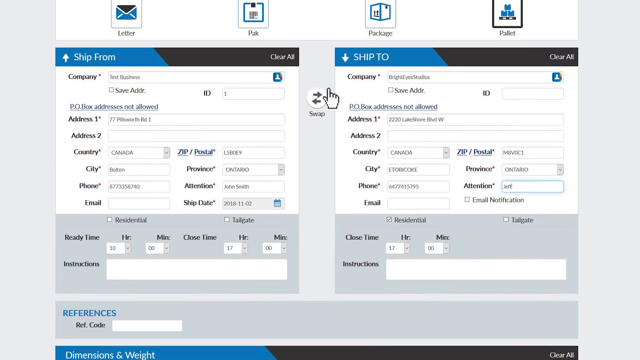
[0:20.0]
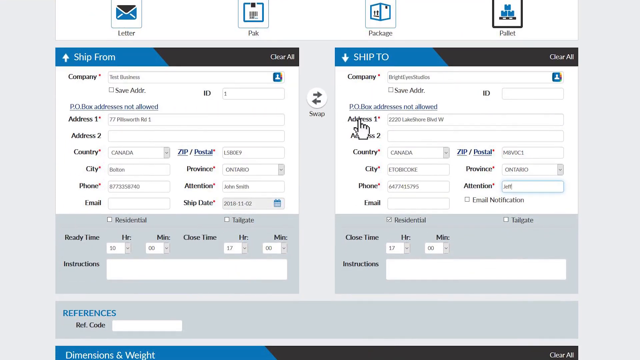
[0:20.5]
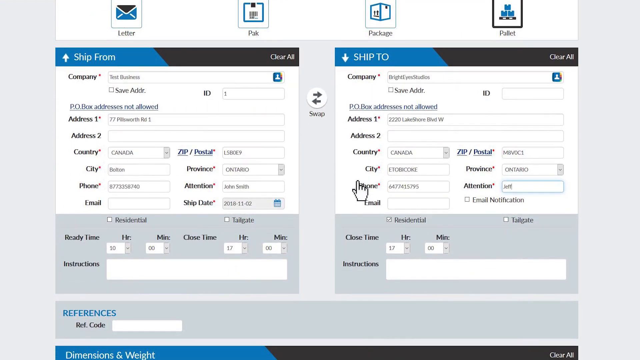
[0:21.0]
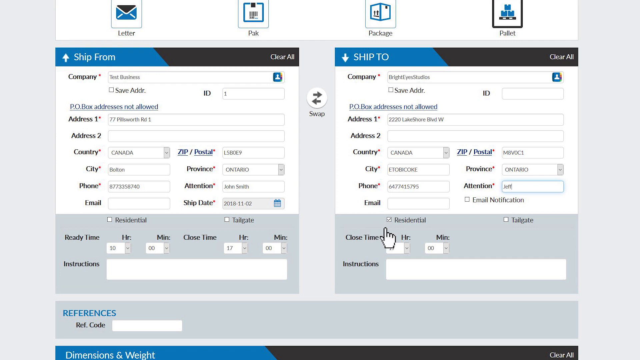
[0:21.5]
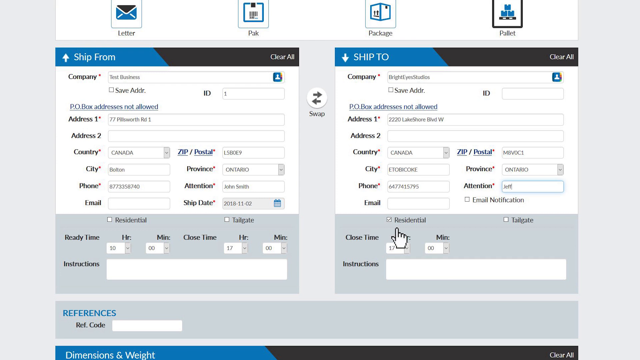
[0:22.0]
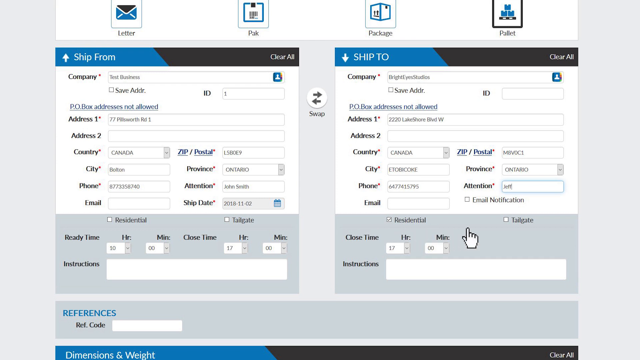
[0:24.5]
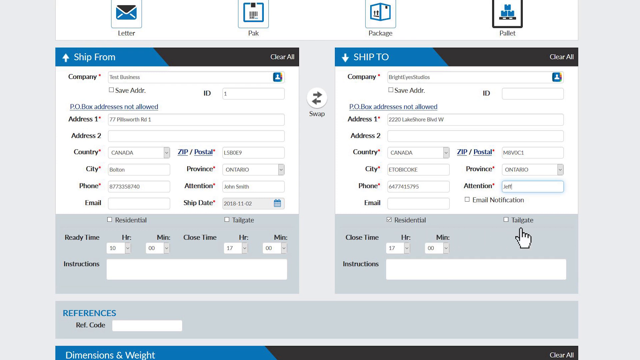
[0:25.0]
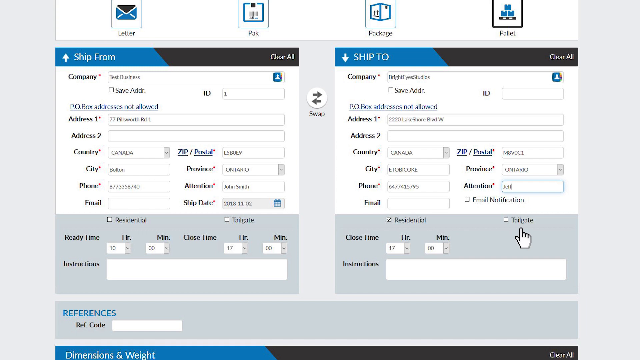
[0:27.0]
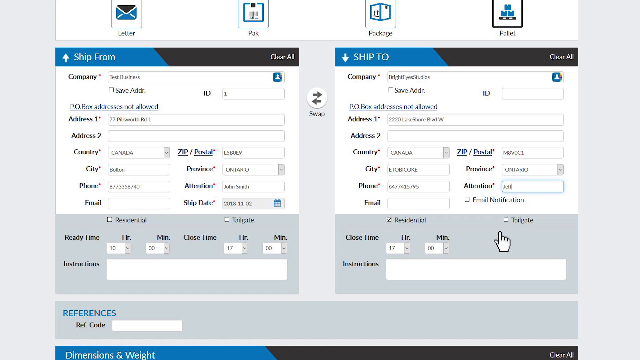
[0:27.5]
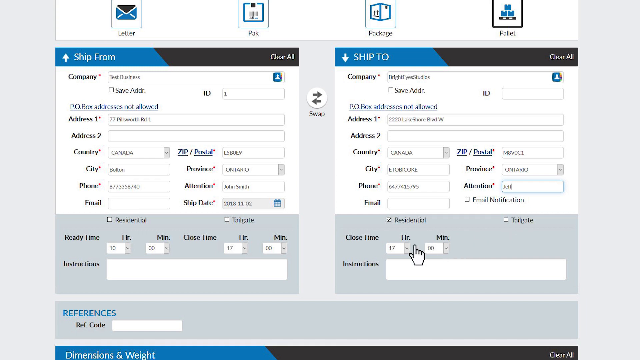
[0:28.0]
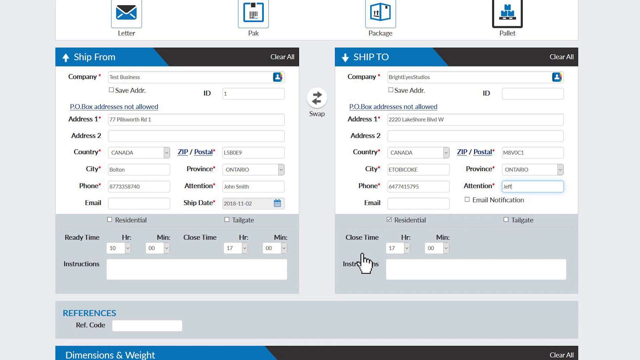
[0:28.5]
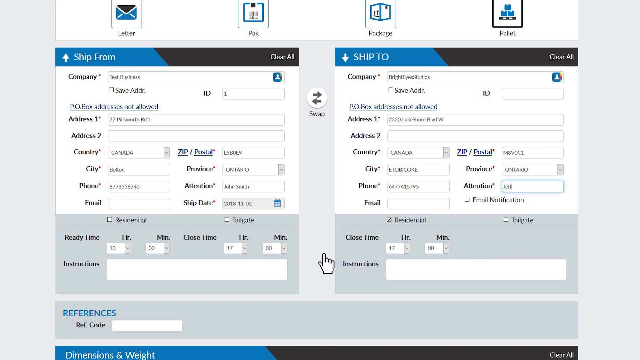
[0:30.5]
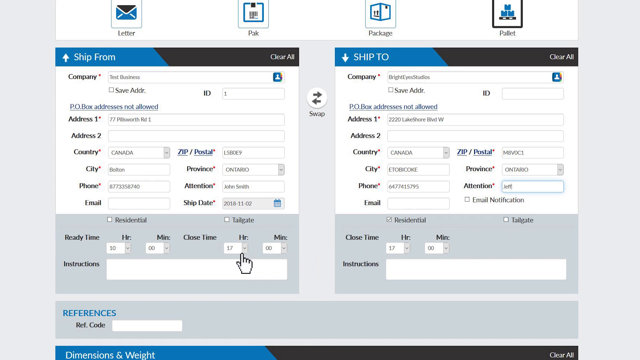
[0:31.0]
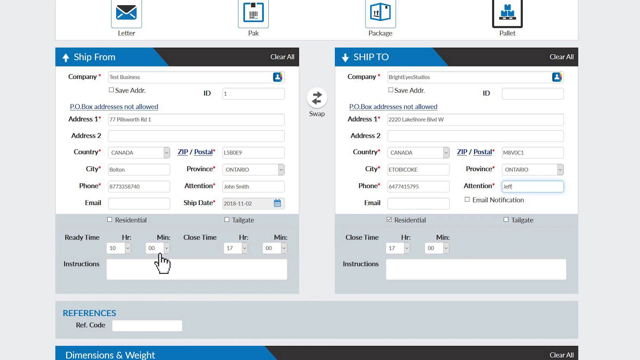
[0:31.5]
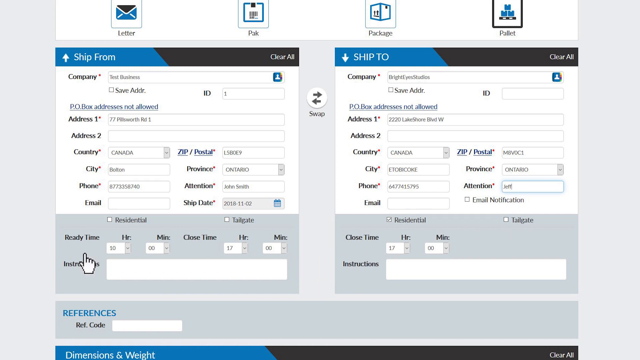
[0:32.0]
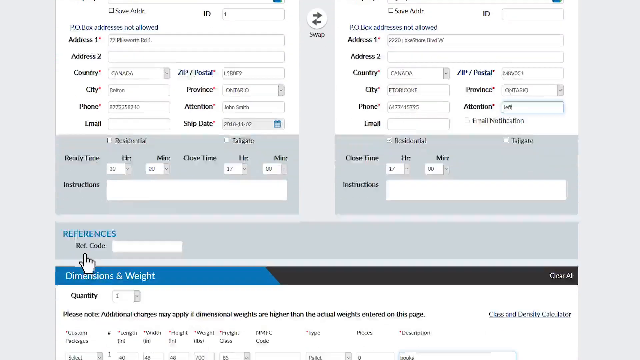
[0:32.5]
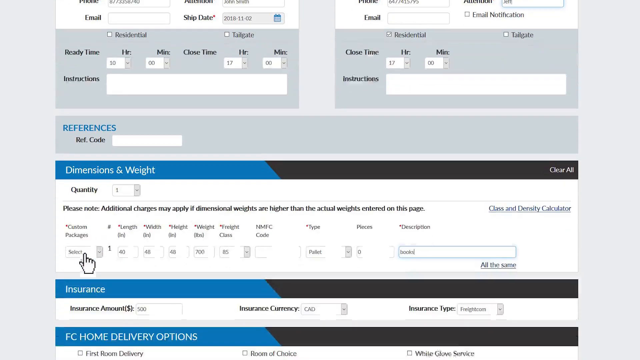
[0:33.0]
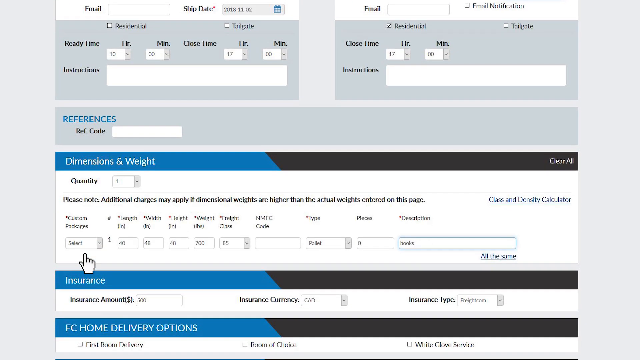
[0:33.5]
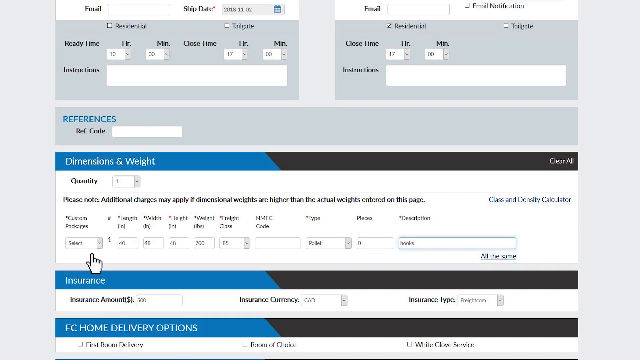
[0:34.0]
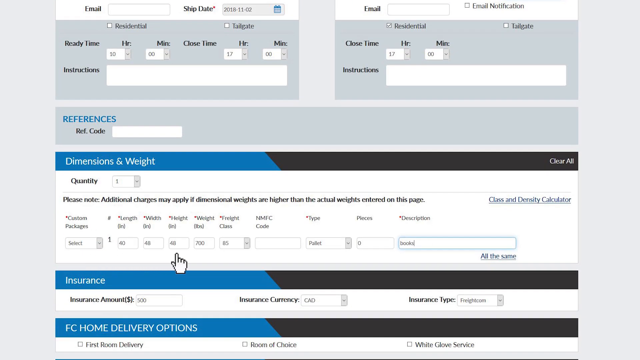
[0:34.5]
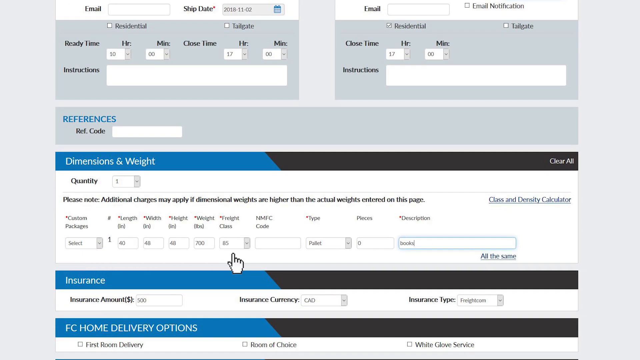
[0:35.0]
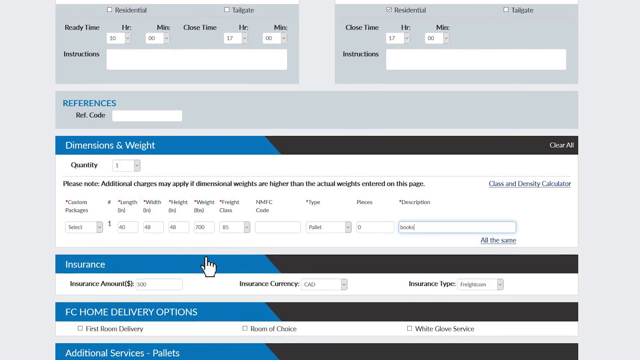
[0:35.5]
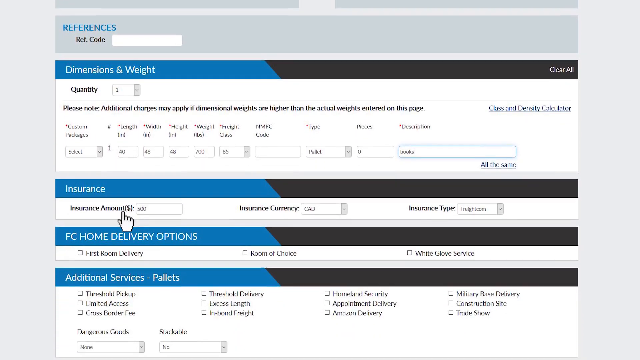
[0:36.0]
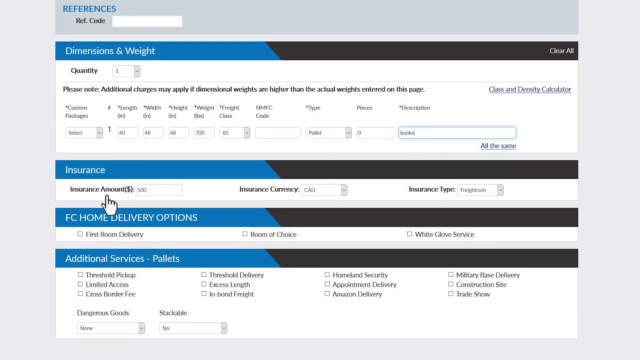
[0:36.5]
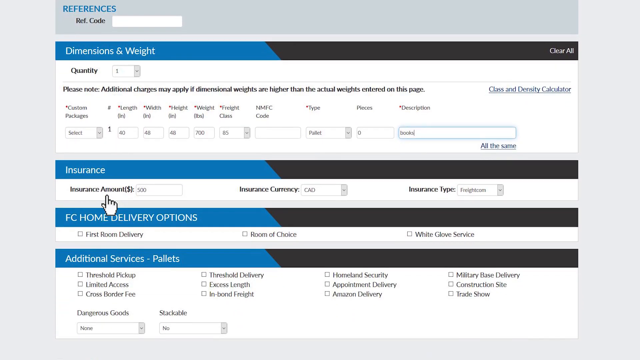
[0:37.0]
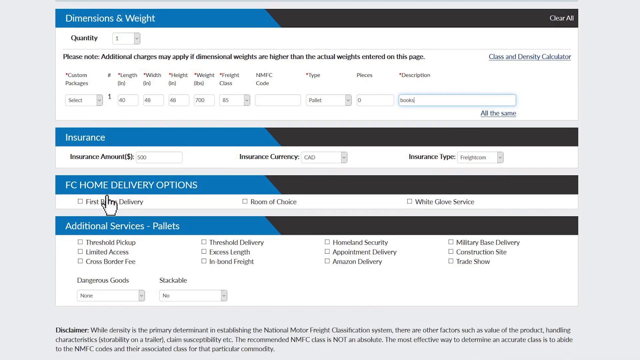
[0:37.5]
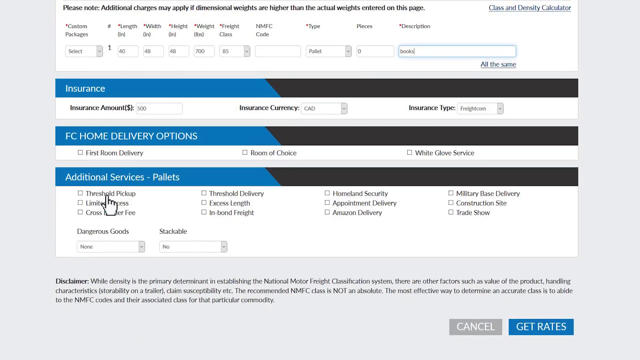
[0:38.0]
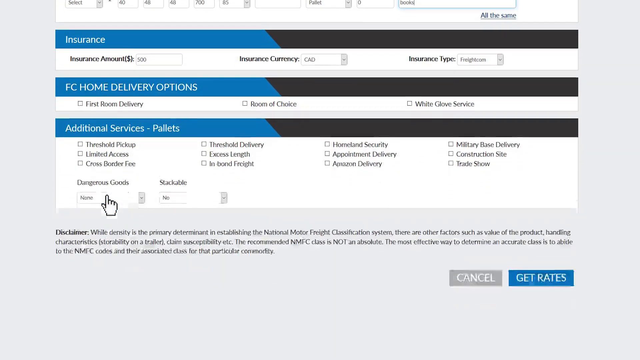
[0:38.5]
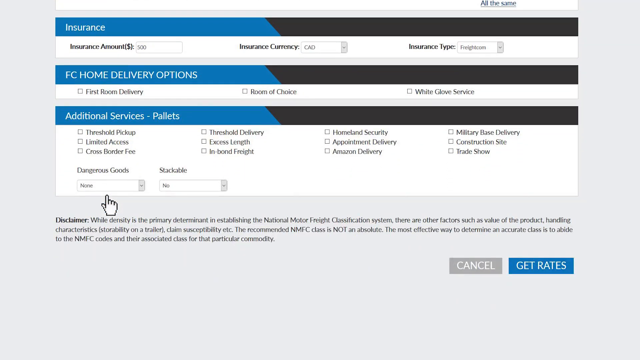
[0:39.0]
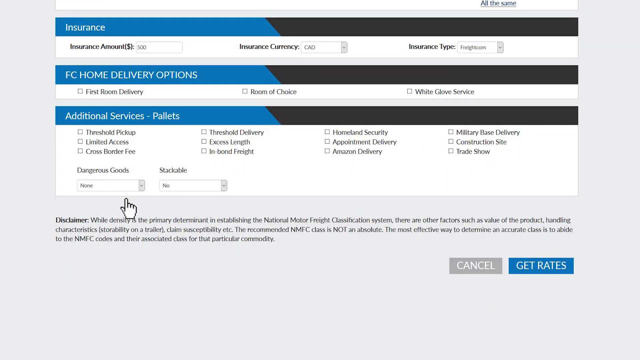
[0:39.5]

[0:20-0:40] A web page is shown with an arrow shaped like a hand pointing at different spots on it. The page has two large rectangular boxes and three large, long rectangular boxes, with categories to fill in, such as address and zip code. Below that are several long rectangular boxes. The arrow moves back and forth, pointing out different items and stopping on "residential", "Choose time", "select insurance account" and others. The two large rectangular boxes are for shipping to and from. The long rectangular boxes are for "dimensions and weight", "insurance", "FC home delivery options" and "Additional services - pallets". At the bottom it says "cancel" or "get rates". The background is gray and the boxes themselves are white, each with a swap button in the middle.